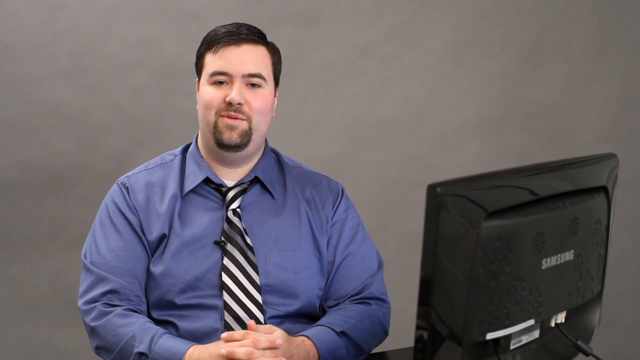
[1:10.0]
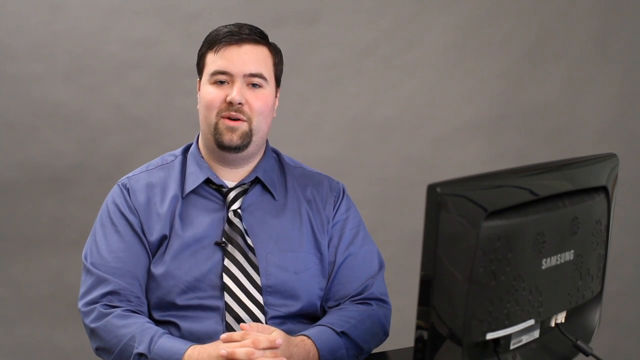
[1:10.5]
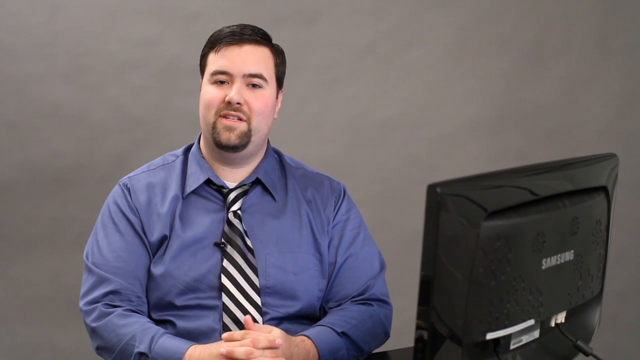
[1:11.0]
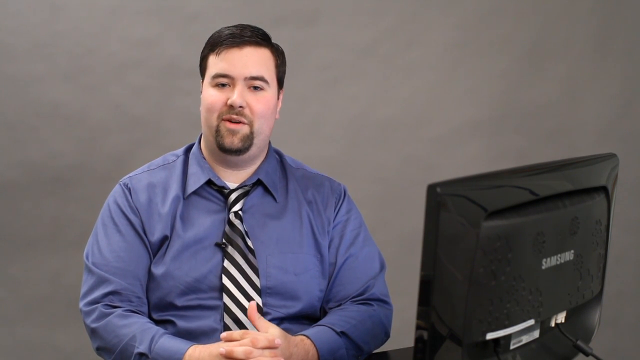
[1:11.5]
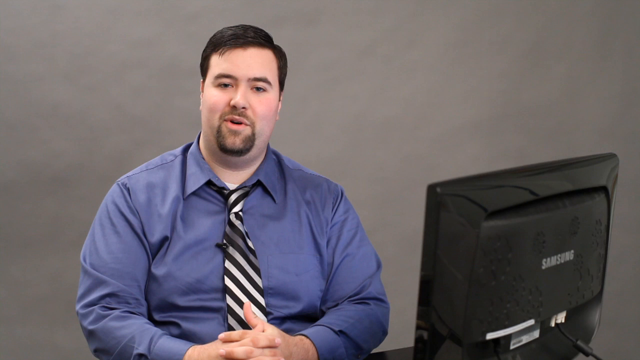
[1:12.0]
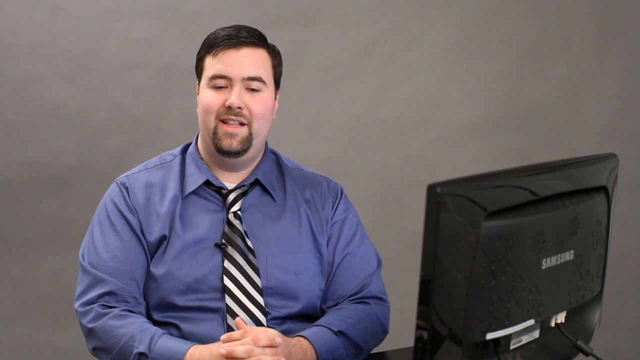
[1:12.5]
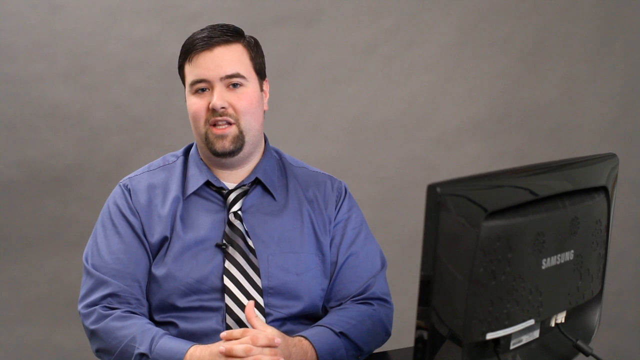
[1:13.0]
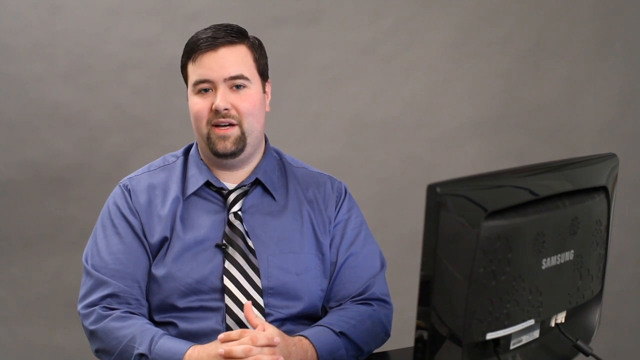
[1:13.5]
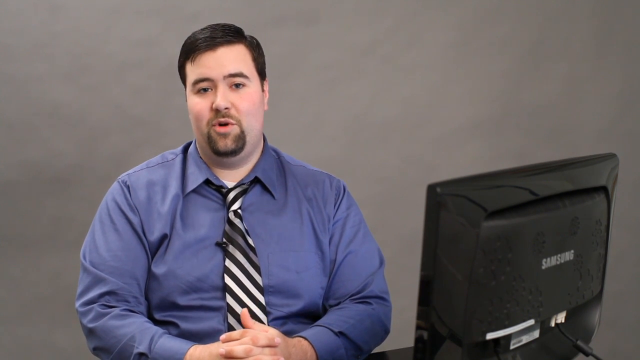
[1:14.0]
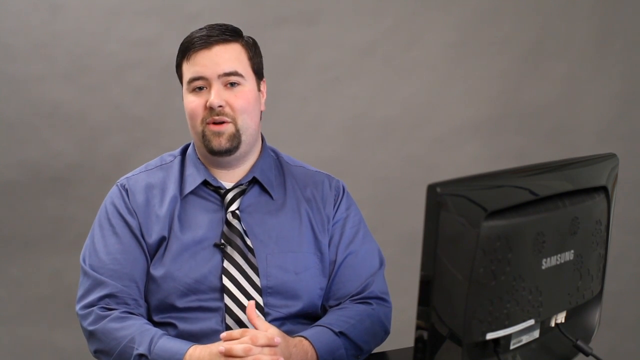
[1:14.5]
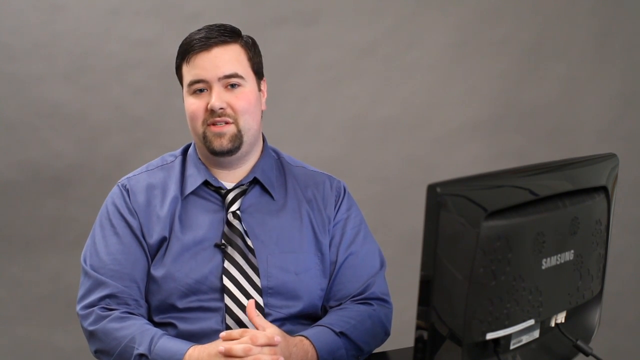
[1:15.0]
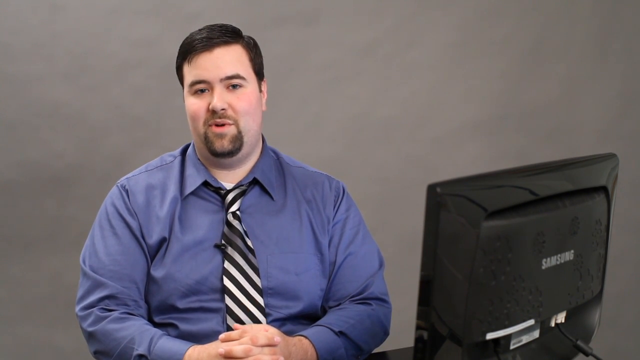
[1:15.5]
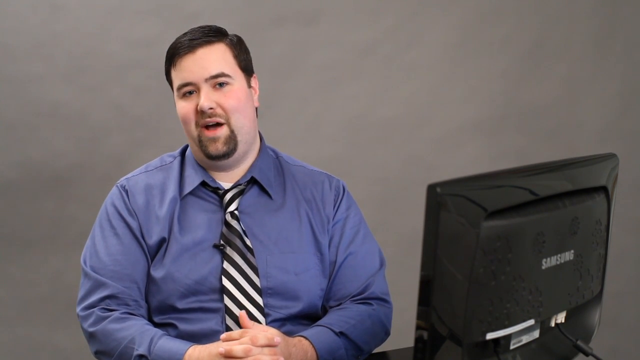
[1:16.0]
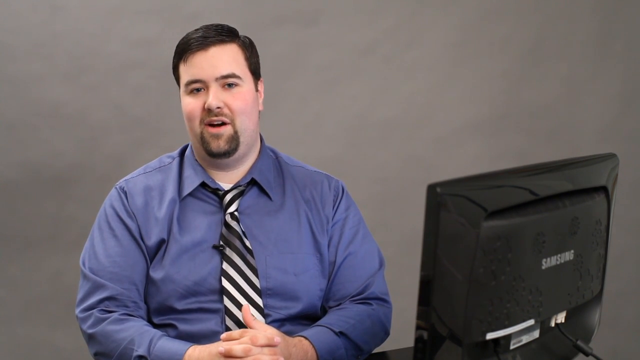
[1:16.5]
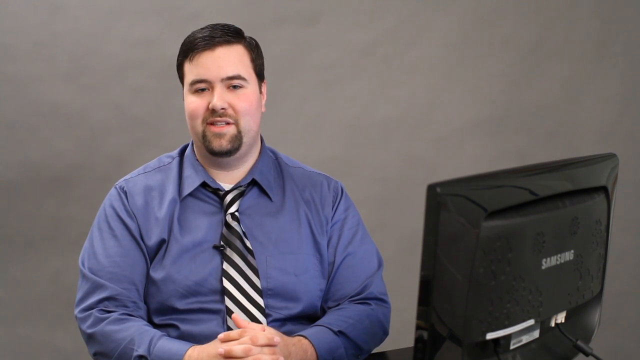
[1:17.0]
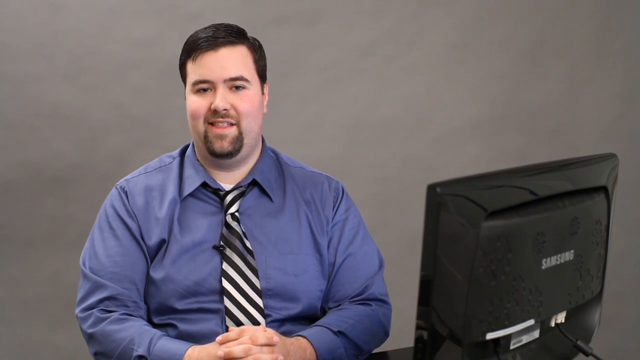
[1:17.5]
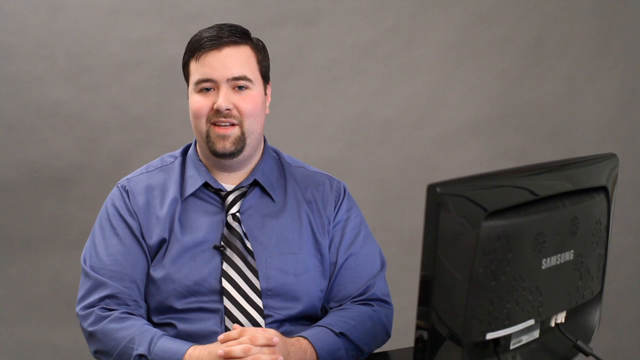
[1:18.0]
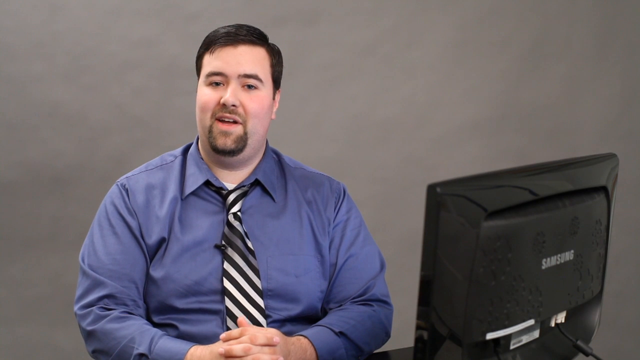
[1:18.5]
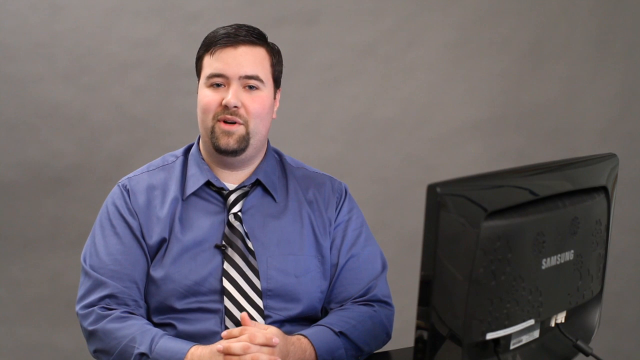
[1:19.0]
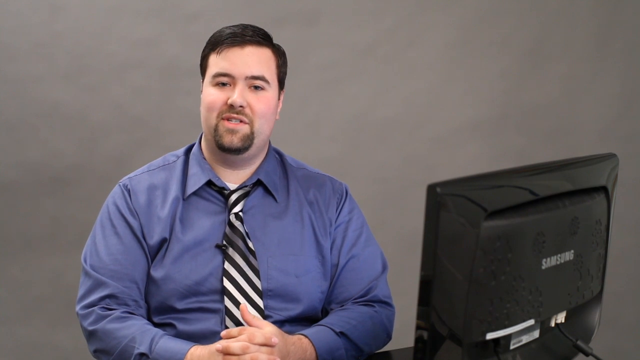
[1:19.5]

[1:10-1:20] Josiah speaks to the camera with his hands clasped together on top of the desk in front of him, staring directly into the camera with a slight grin. The back of the Samsung monitor appears very dusty with fingerprints on it, though the marks could possibly be air vents. His shirt is sort of frumpy and might be a little too large for him, or possibly just a bad cut for his body size.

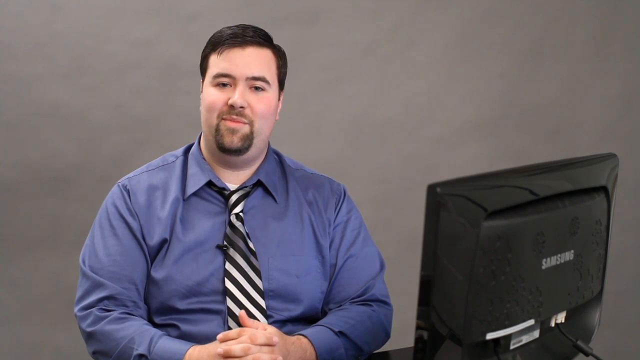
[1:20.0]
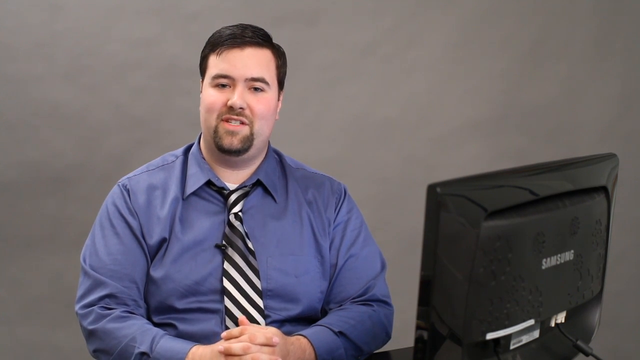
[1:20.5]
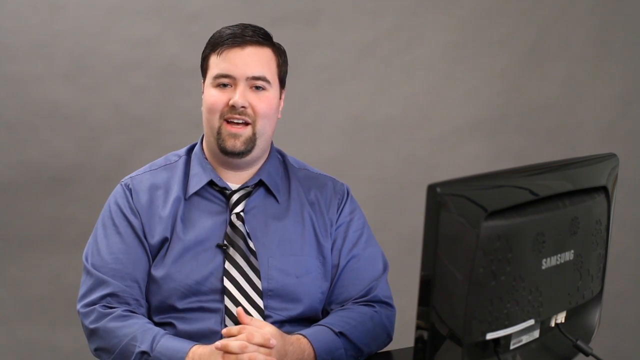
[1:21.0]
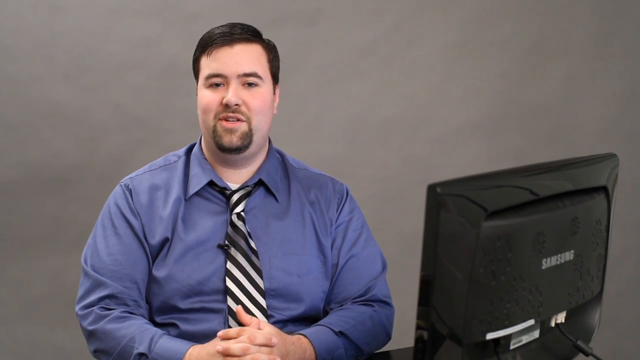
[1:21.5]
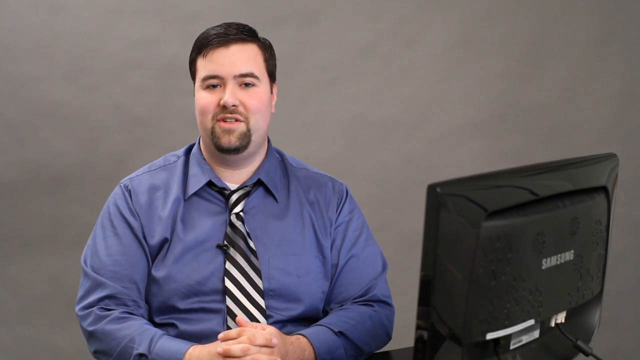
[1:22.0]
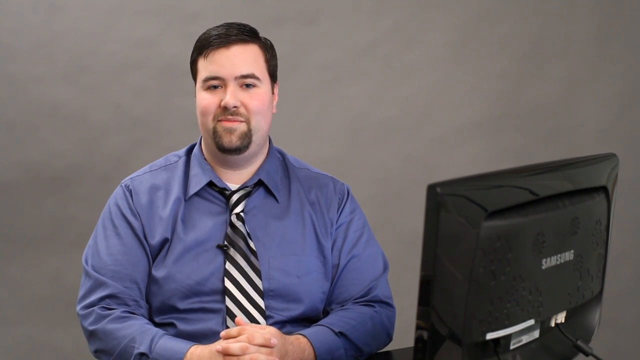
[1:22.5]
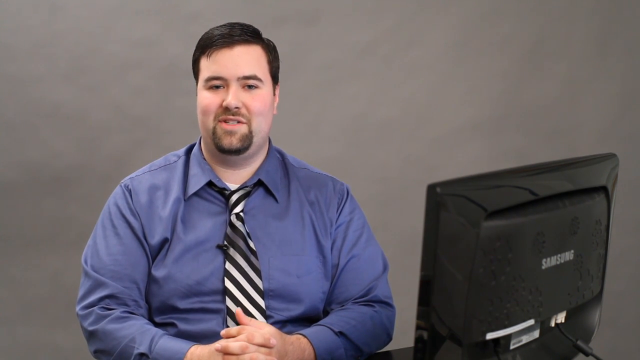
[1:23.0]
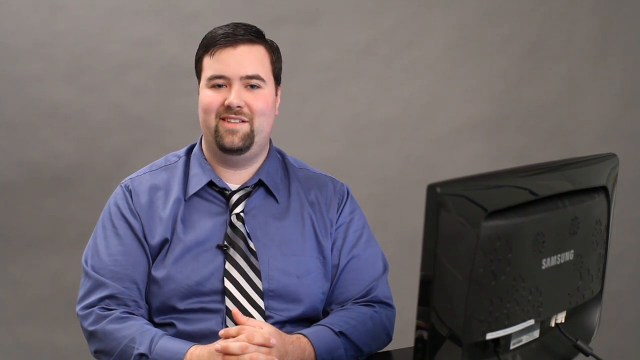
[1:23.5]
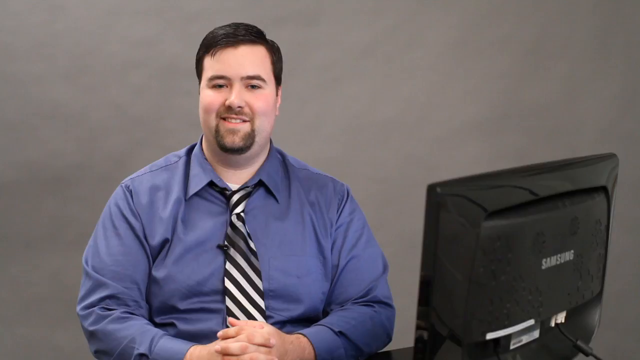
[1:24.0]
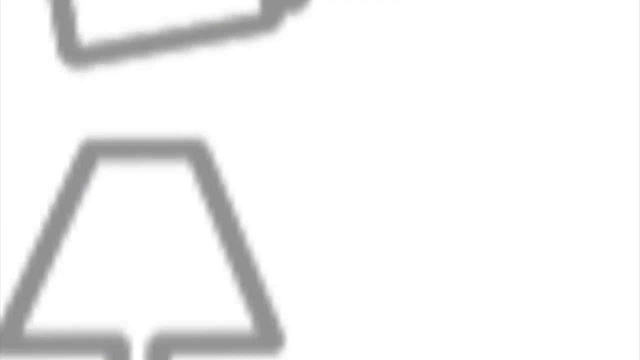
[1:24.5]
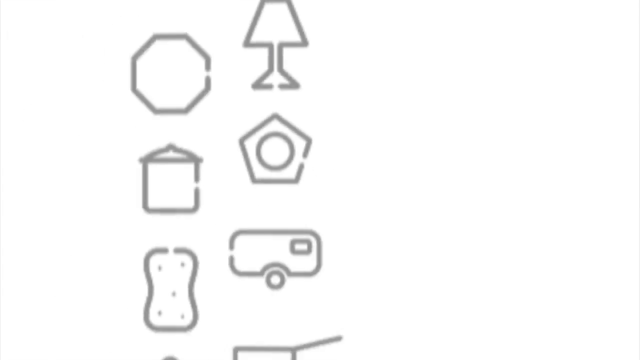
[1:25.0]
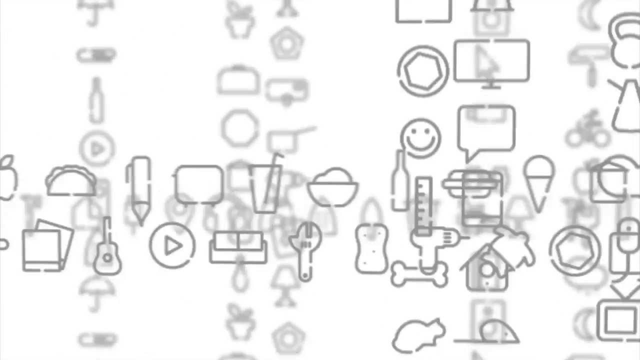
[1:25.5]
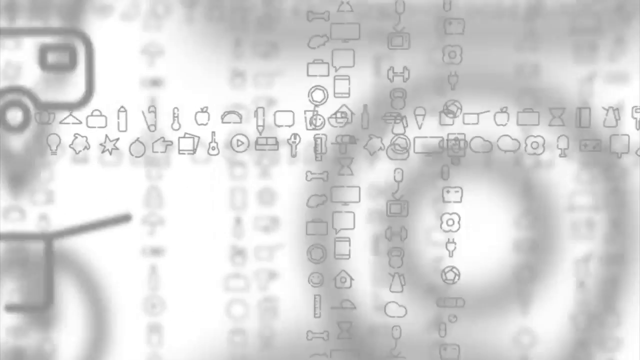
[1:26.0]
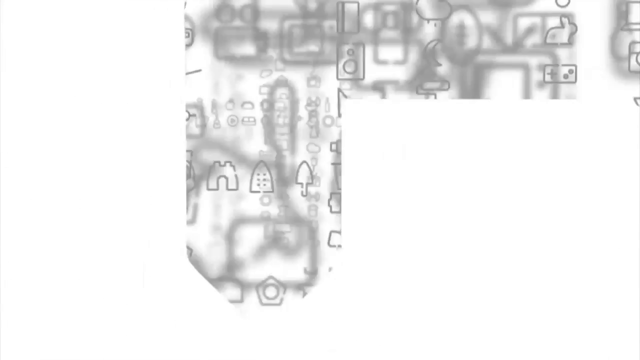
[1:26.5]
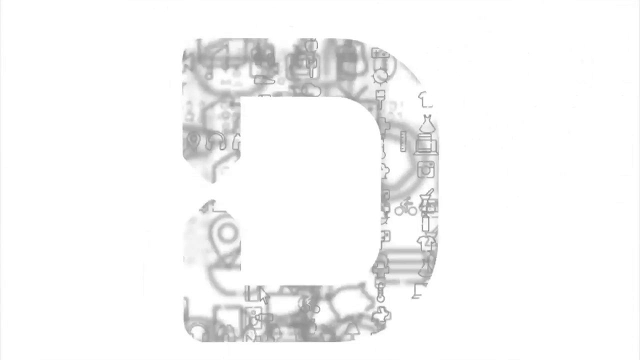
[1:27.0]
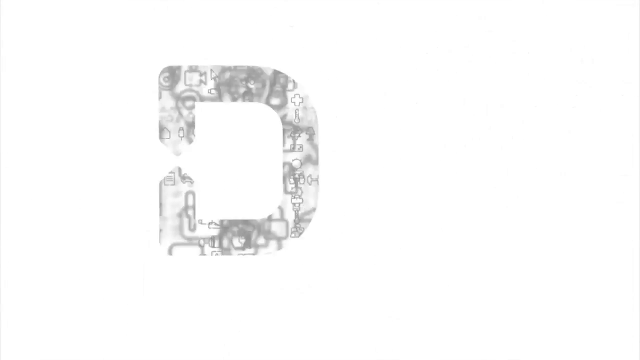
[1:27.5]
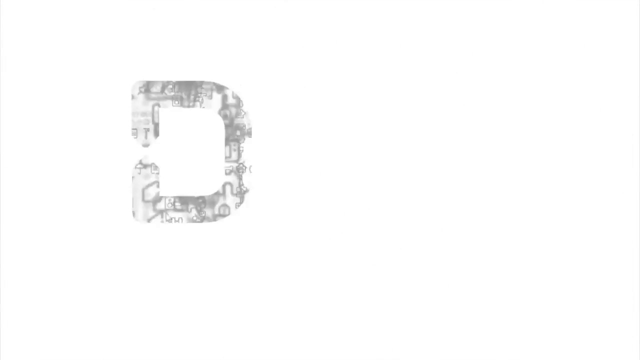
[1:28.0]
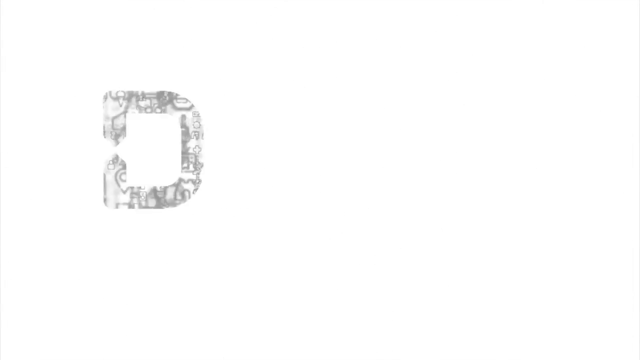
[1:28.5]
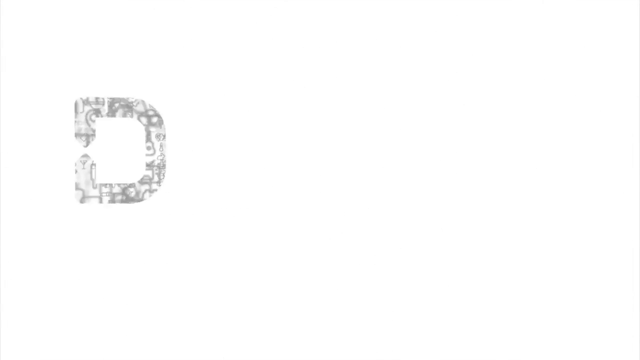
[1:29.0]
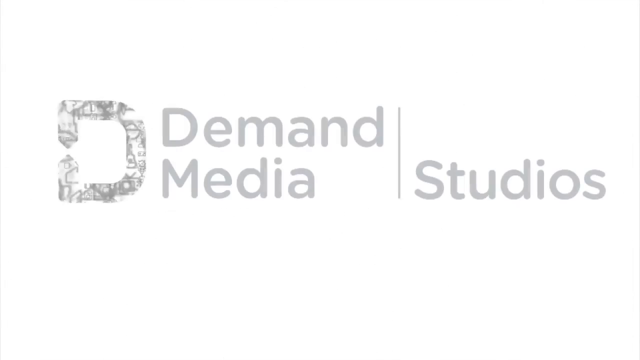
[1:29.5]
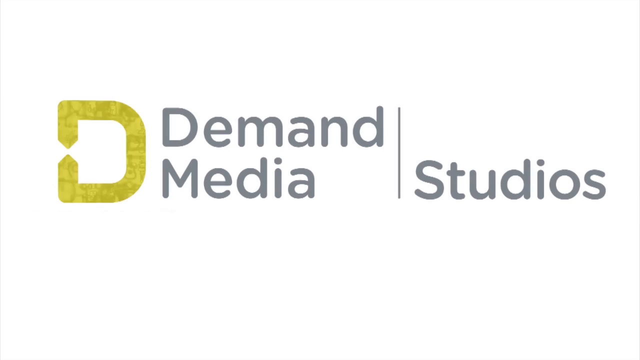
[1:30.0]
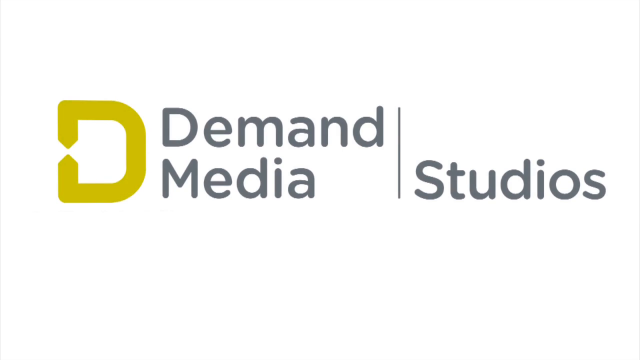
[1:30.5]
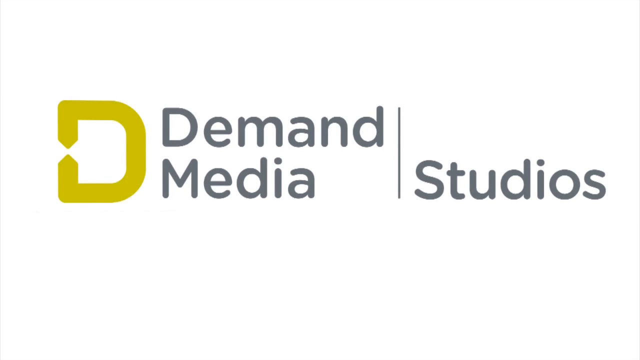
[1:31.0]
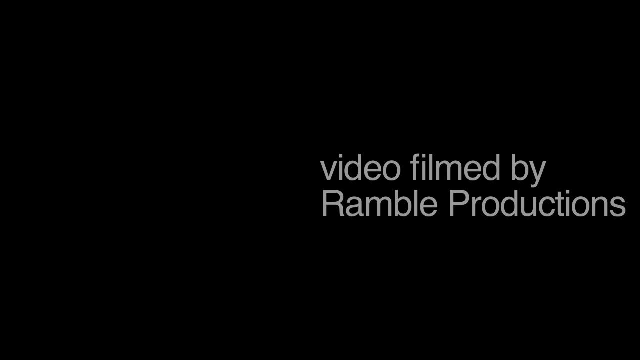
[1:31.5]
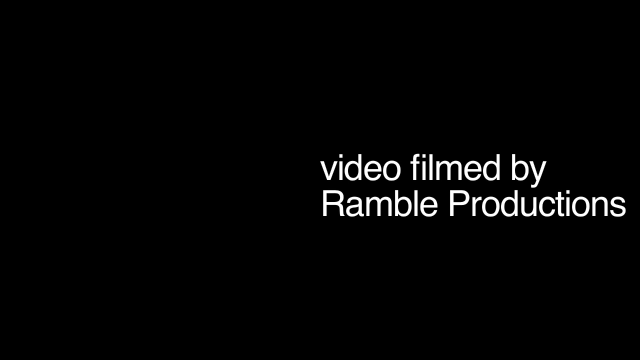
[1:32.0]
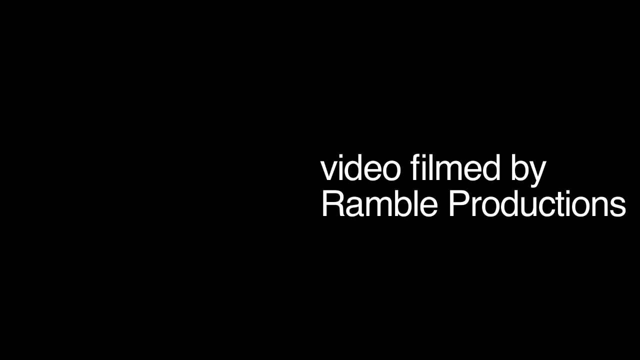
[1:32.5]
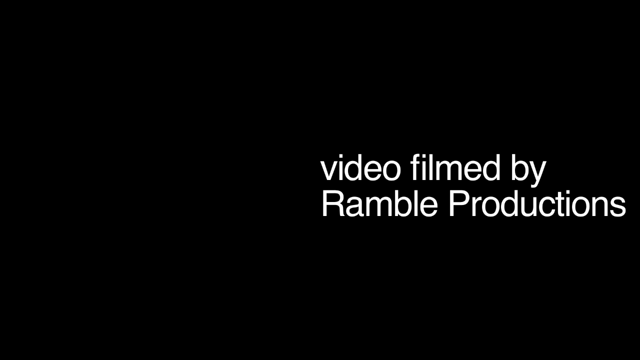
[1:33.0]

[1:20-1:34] Josiah is sitting in front of his desk, speaking to the camera and moving his thumbs around while his hands remain clasped in front of him. He tilts his head back and forth in a casual conversational manner. The background behind him is a solid light gray, and there appears to be professional lighting. The screen then transitions to the outro of the video, Demand Media Studios, which says it was filmed by Ramble Productions.